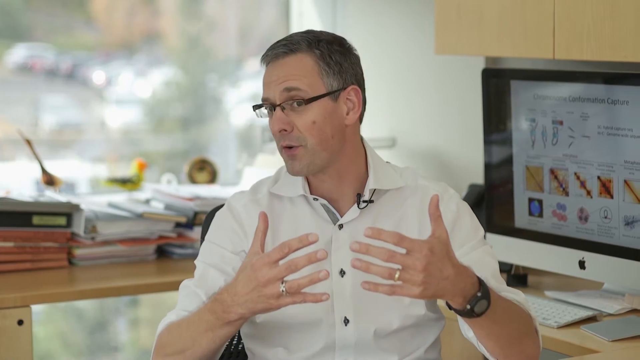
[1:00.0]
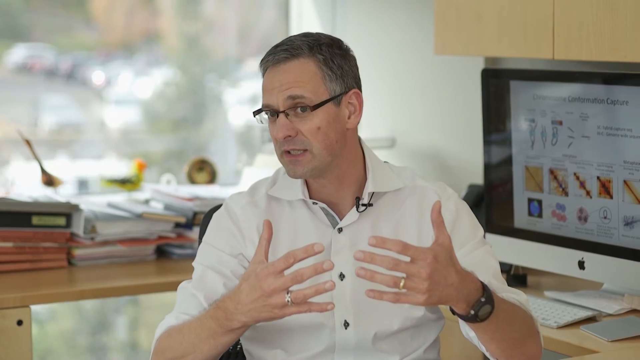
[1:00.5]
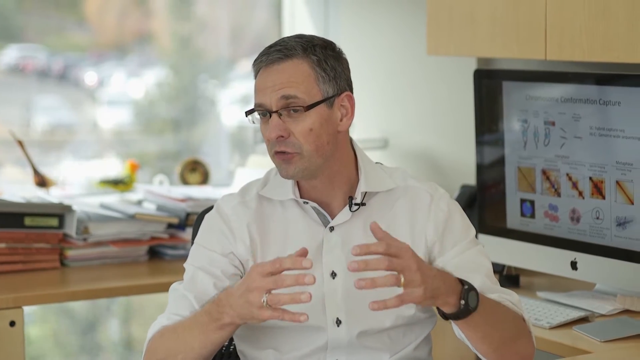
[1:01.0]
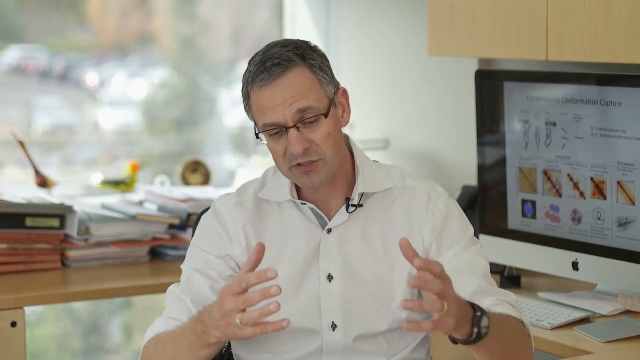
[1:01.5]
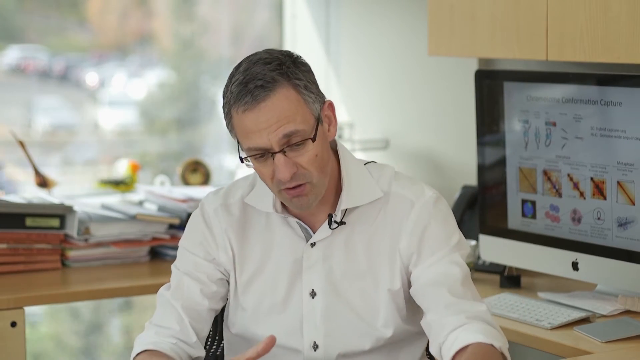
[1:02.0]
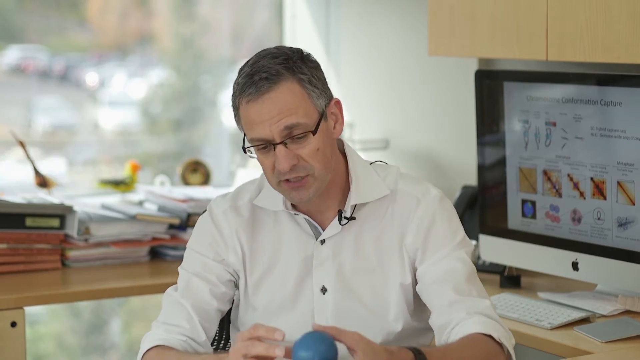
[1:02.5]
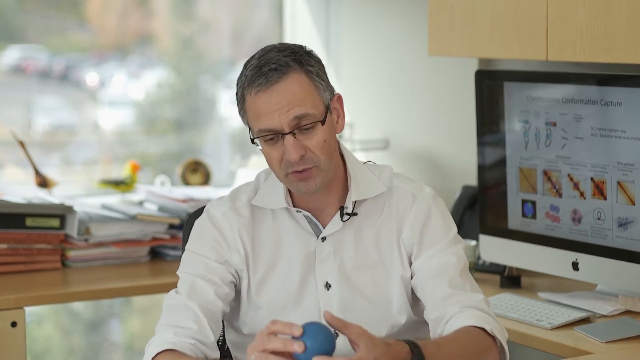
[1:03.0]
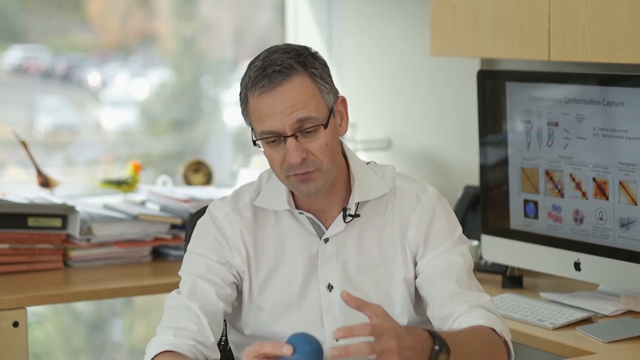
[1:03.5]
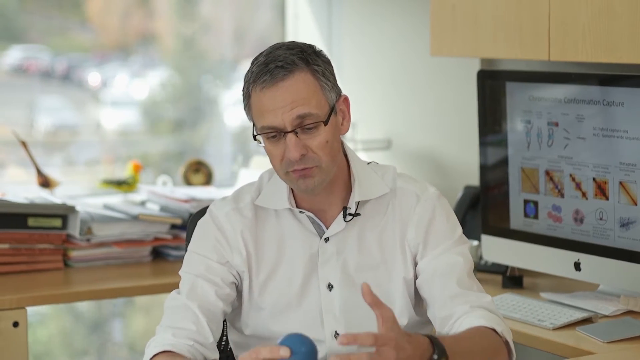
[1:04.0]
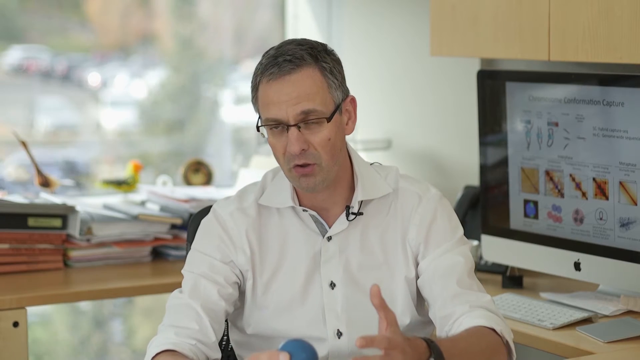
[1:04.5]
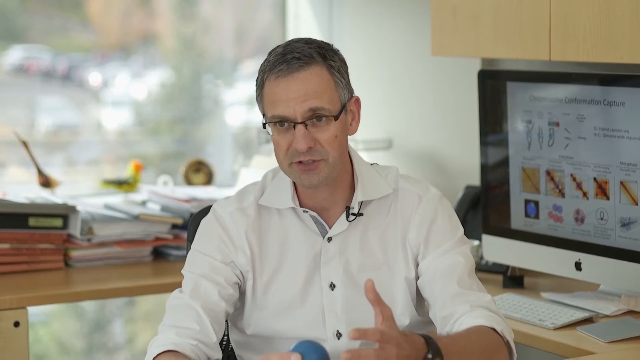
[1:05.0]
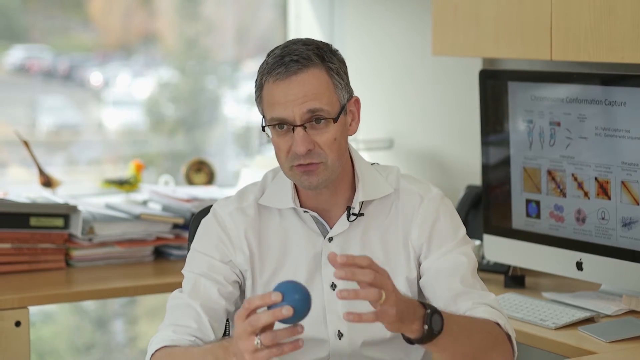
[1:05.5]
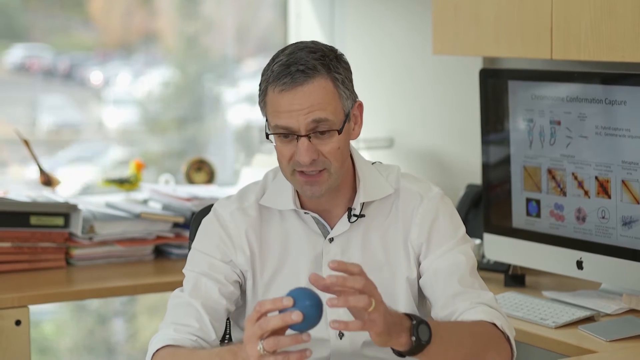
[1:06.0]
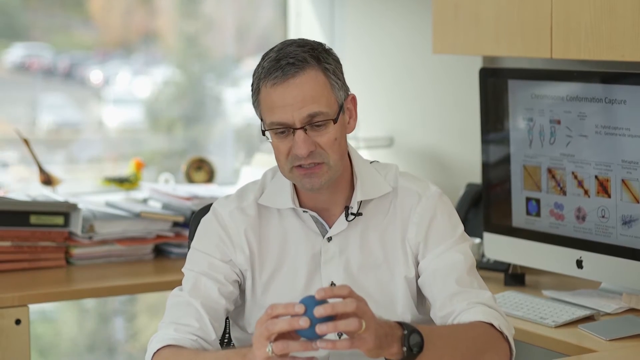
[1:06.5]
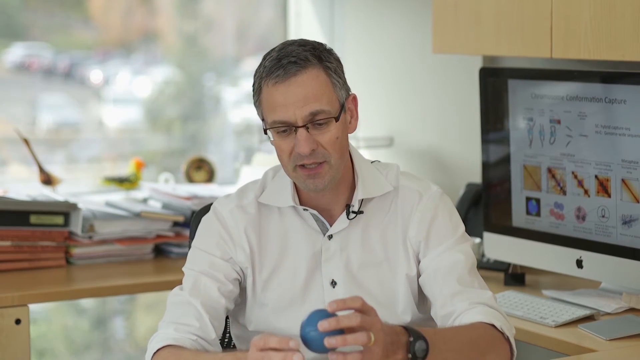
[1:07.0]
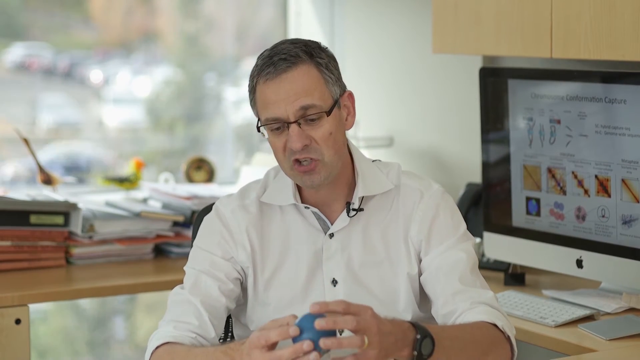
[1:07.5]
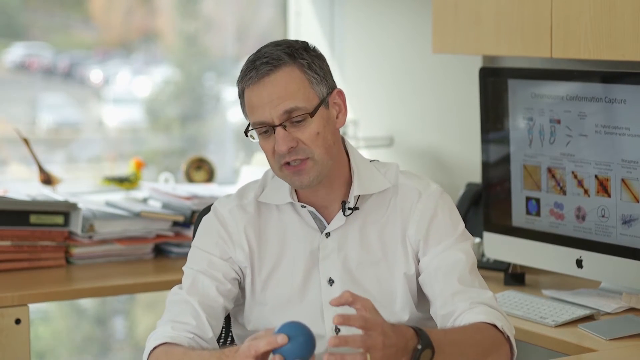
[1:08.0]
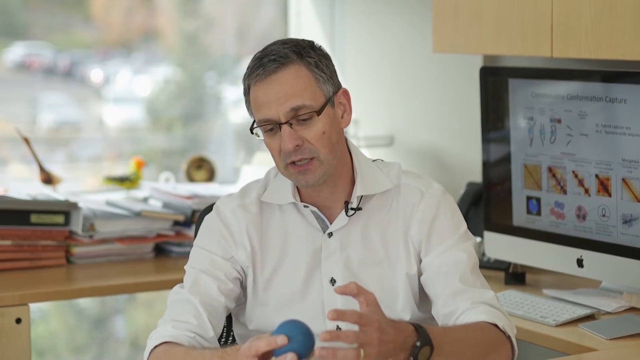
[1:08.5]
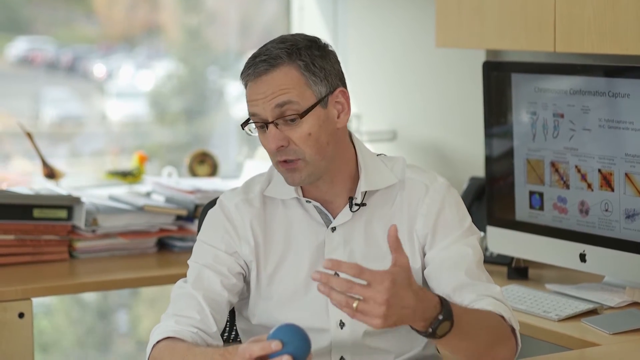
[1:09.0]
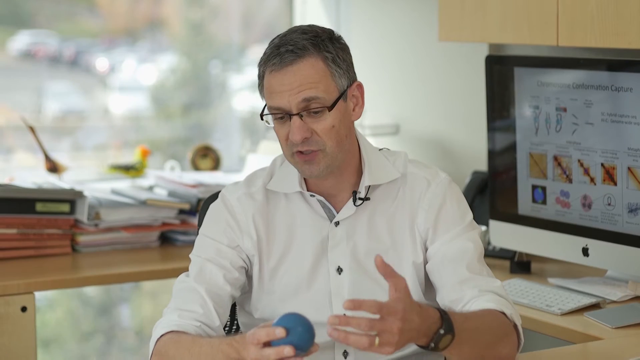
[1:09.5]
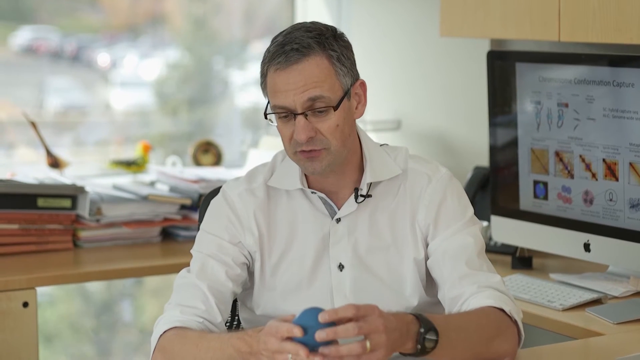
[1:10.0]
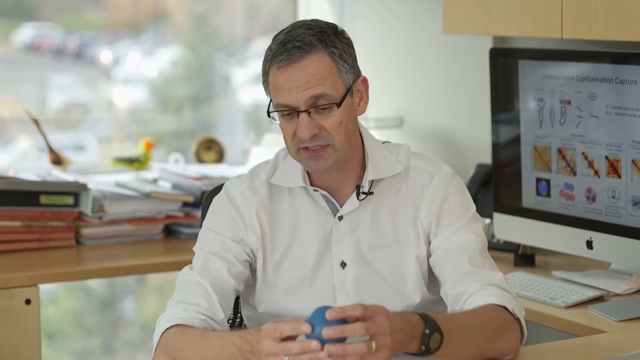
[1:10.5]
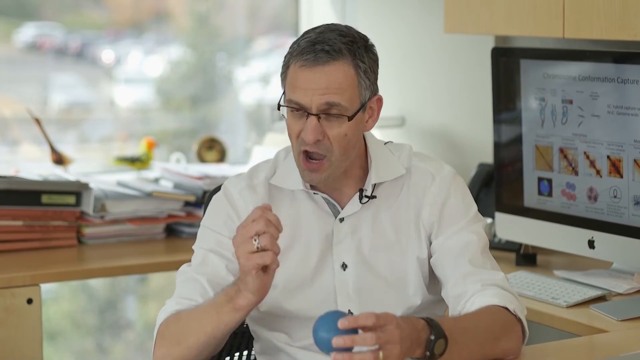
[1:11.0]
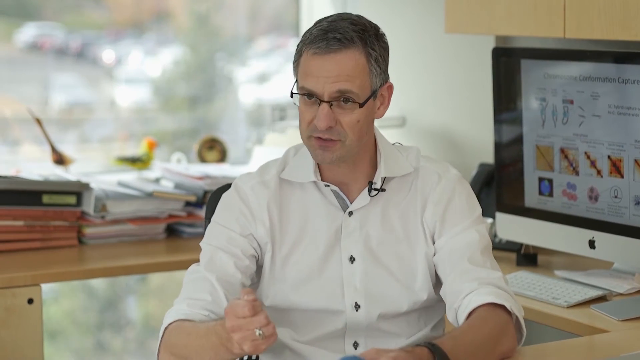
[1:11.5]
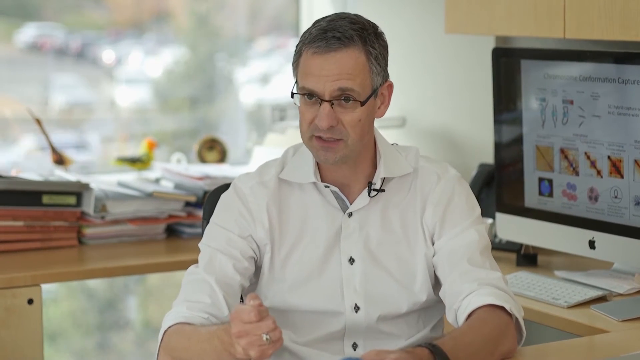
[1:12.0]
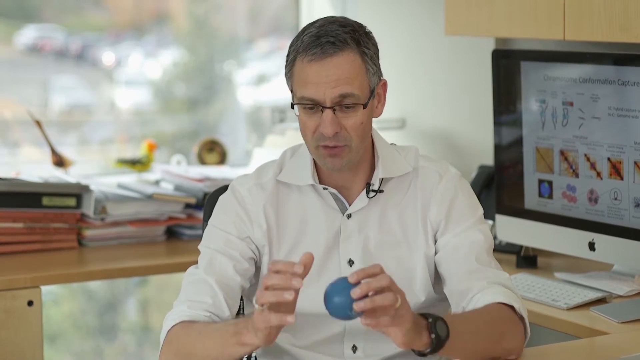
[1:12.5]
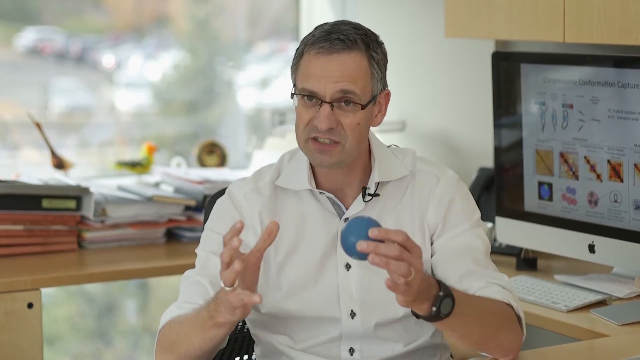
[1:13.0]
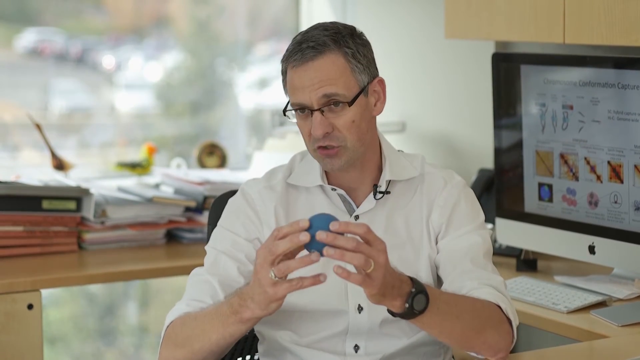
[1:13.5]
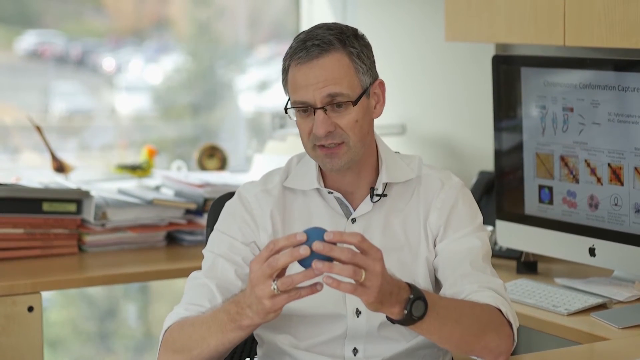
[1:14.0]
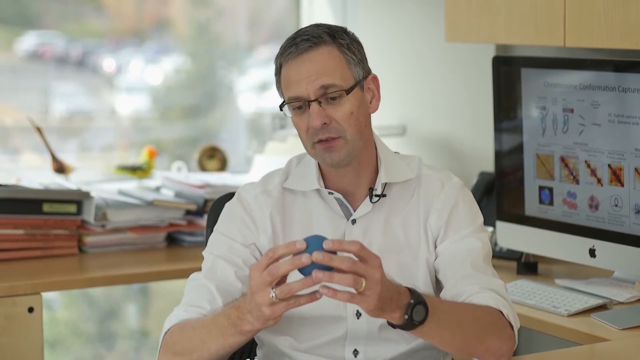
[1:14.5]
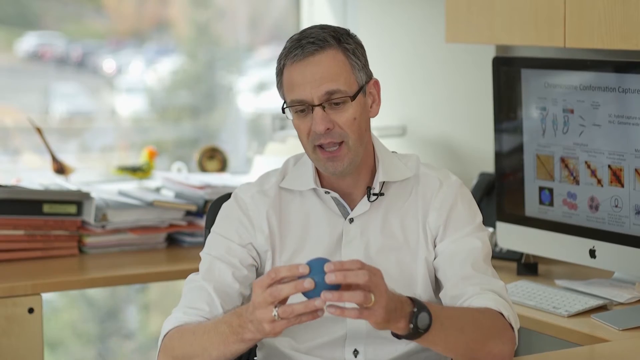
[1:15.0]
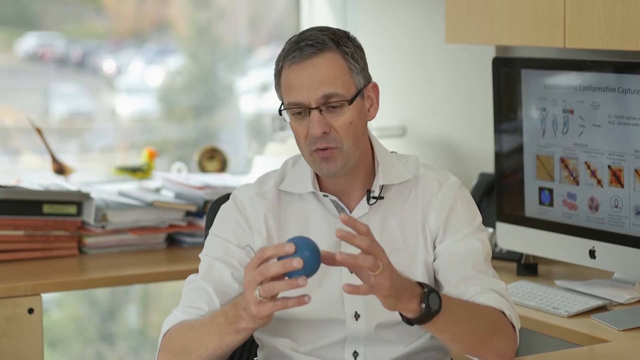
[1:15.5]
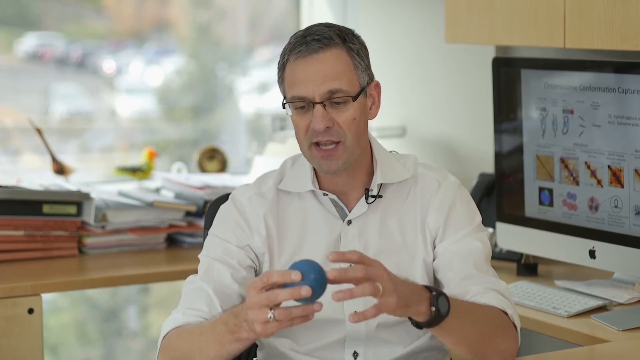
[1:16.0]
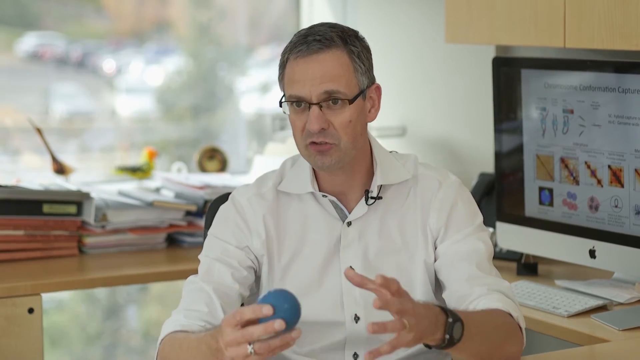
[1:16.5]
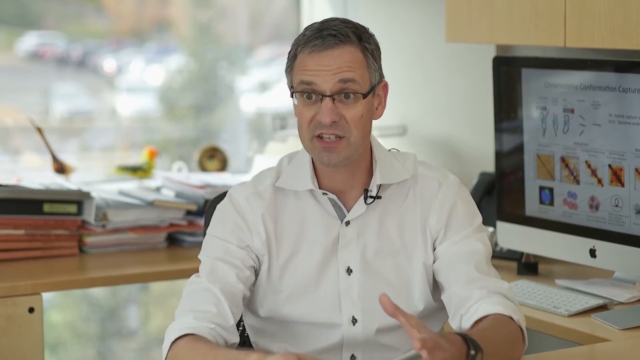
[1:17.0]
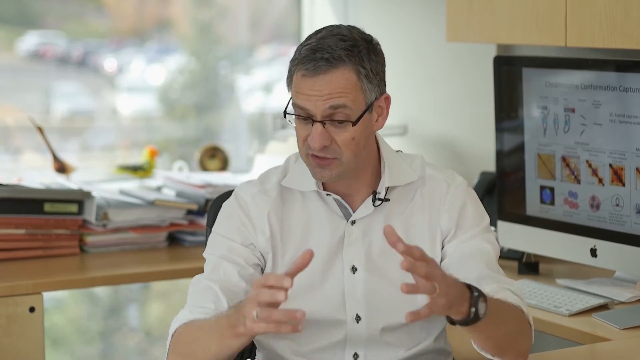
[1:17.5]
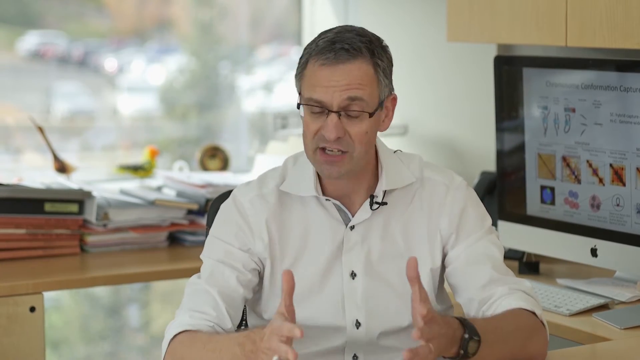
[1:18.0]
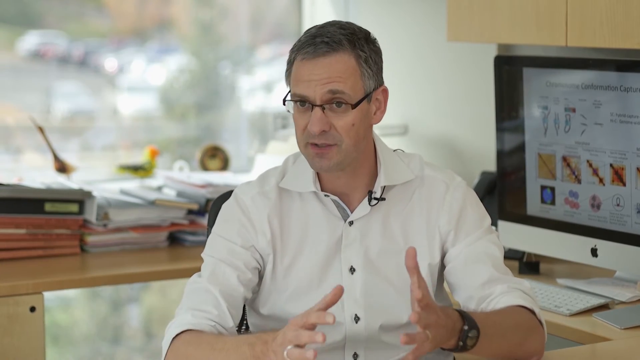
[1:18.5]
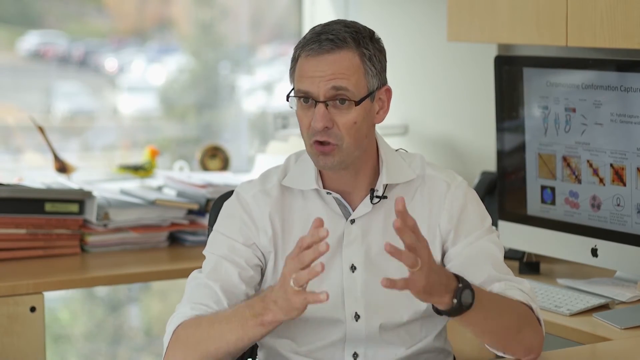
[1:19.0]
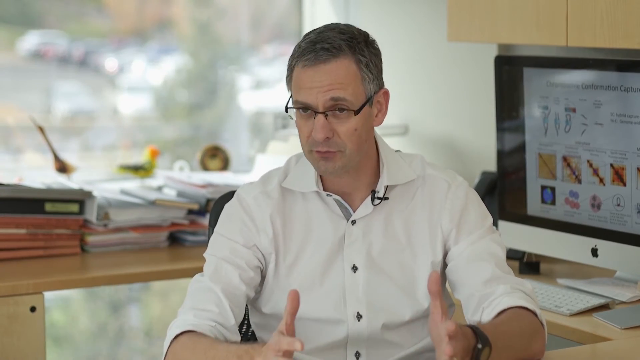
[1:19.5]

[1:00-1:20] The professor from the University of Massachusetts talks expressively. He wears a wedding ring, a black watch and a white shirt. He is sitting in his office, which has brown cabinets, with a desktop computer right next to him and a huge window right behind him through which a parking lot is visible, apparently on a college campus. There are a lot of notebooks and books. He picks up a blue ball that looks like a stress ball and talks about it, still gesturing a lot with his hands. Just before the end, the video seems about to switch to some type of drawing or molecular cell.